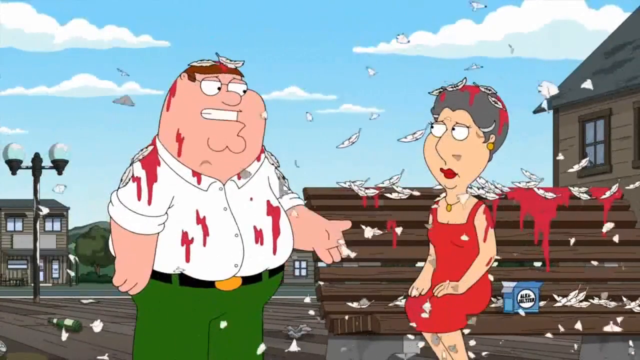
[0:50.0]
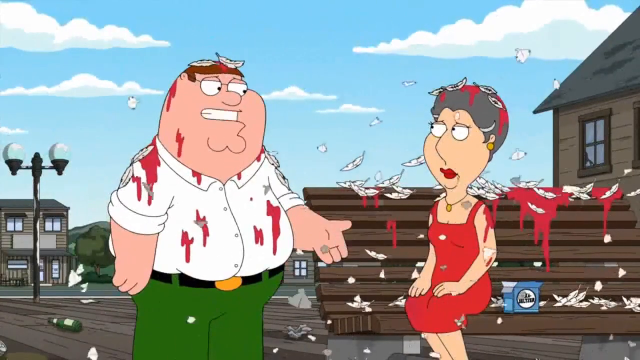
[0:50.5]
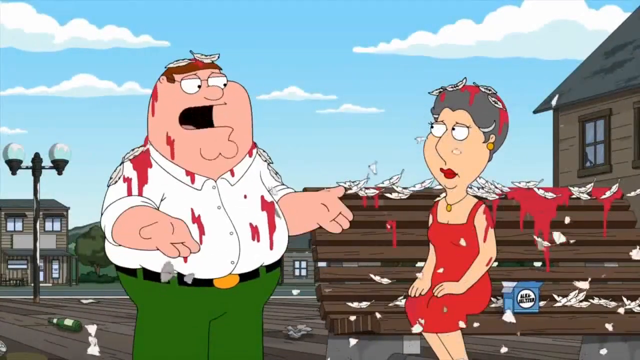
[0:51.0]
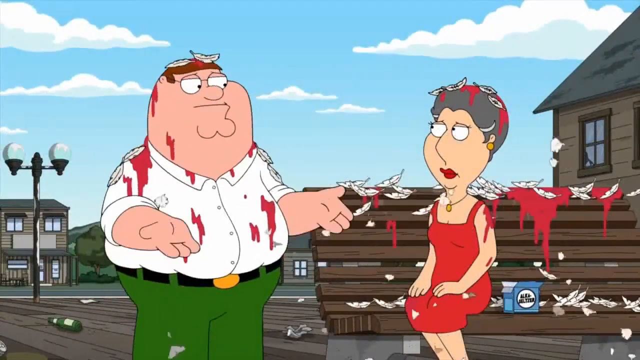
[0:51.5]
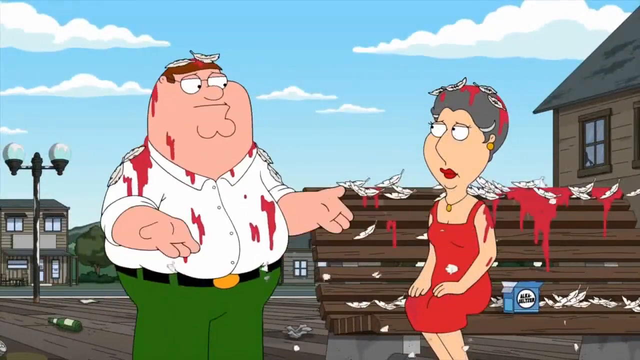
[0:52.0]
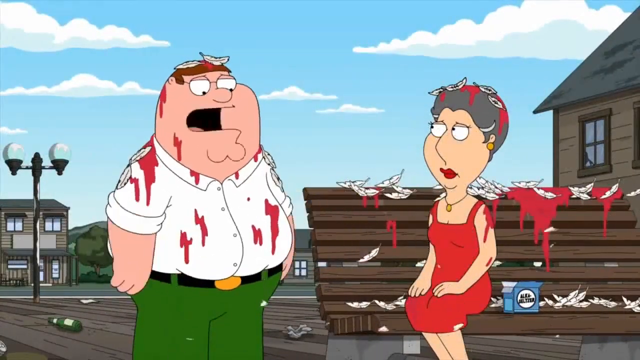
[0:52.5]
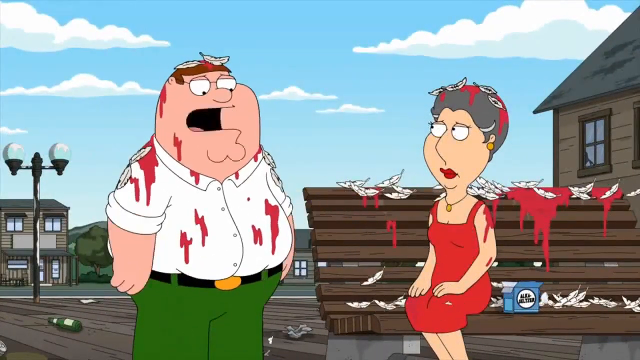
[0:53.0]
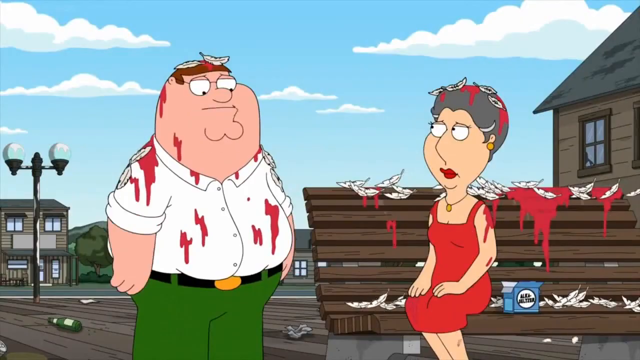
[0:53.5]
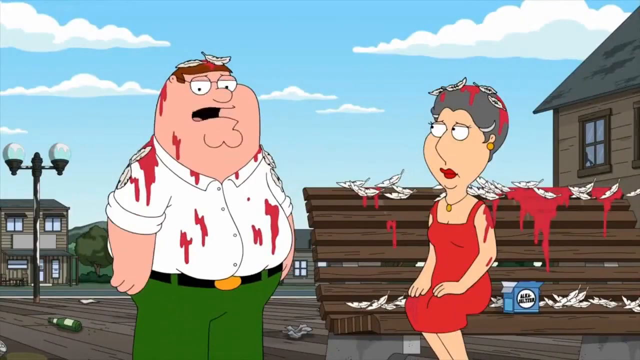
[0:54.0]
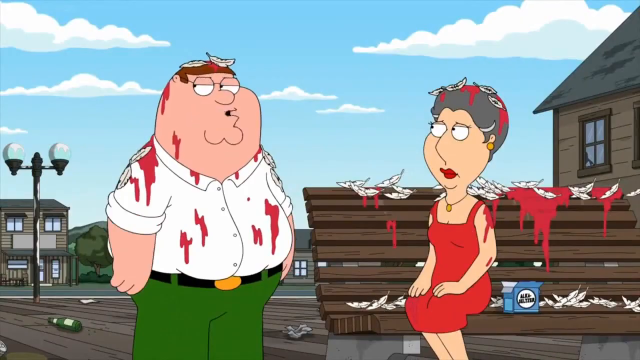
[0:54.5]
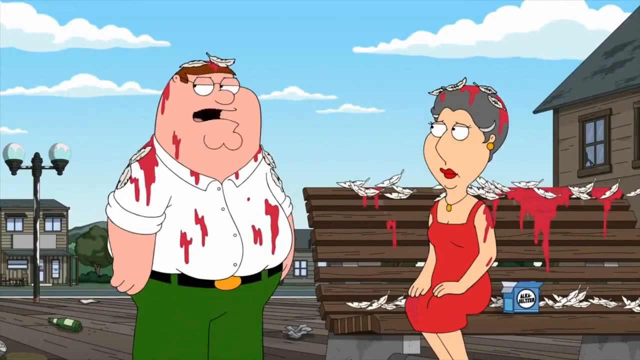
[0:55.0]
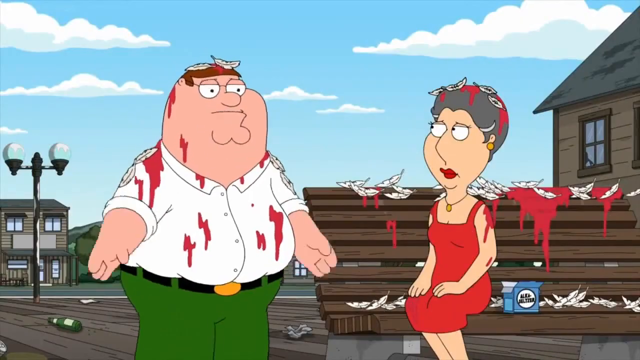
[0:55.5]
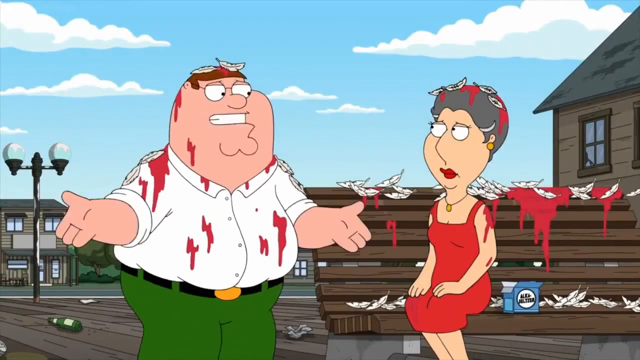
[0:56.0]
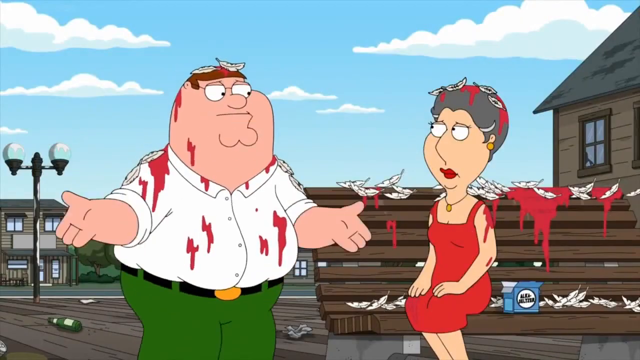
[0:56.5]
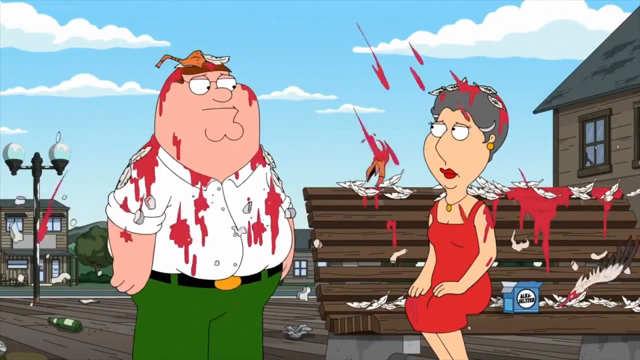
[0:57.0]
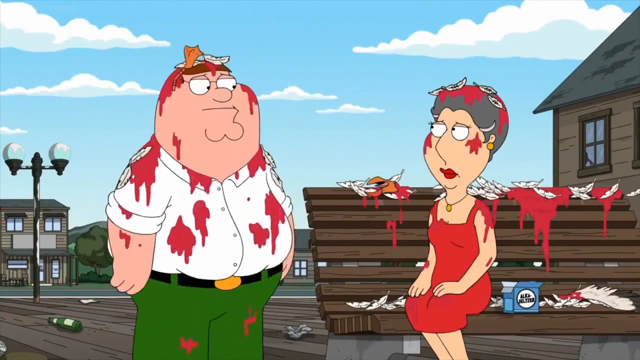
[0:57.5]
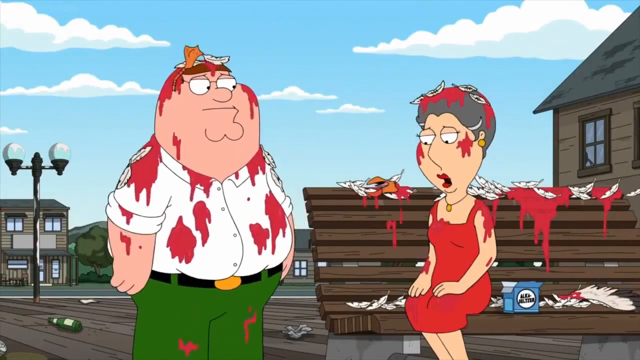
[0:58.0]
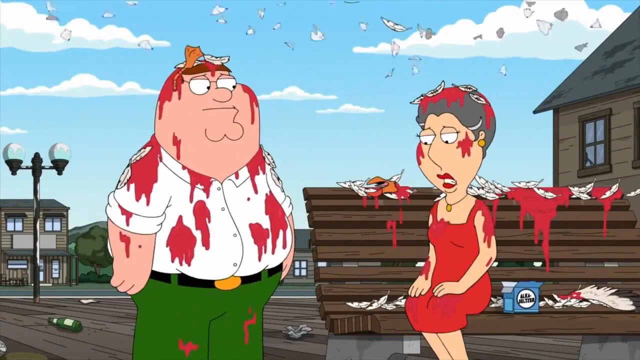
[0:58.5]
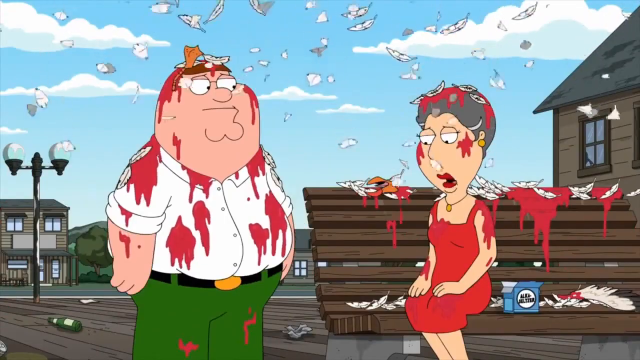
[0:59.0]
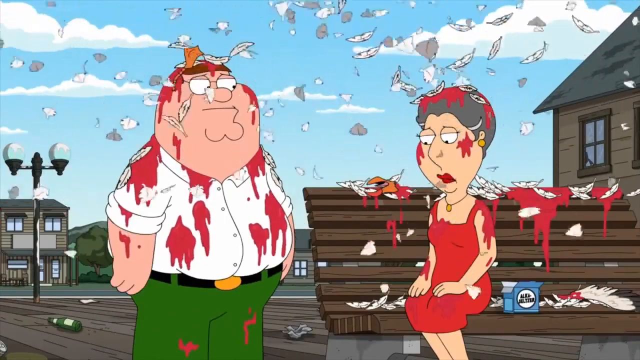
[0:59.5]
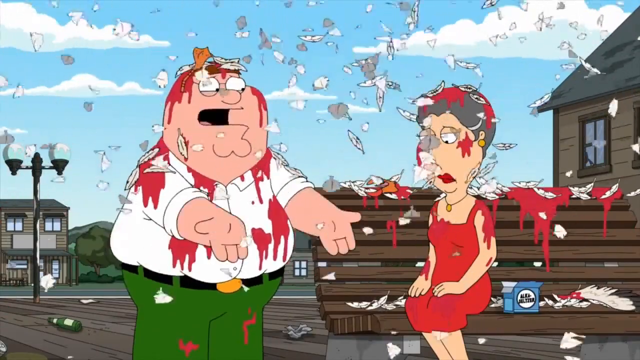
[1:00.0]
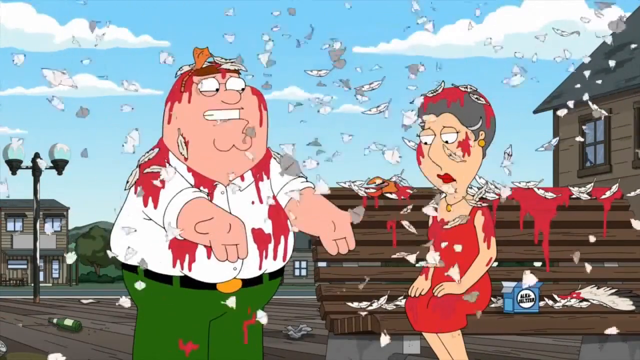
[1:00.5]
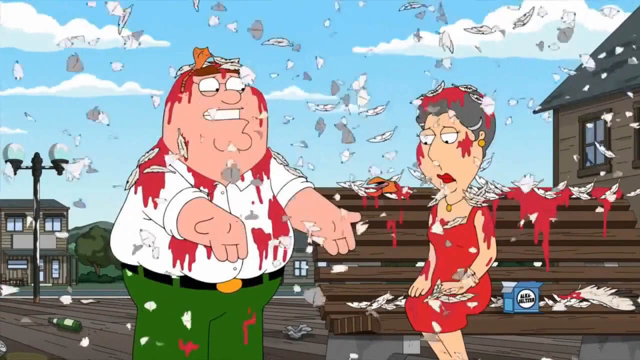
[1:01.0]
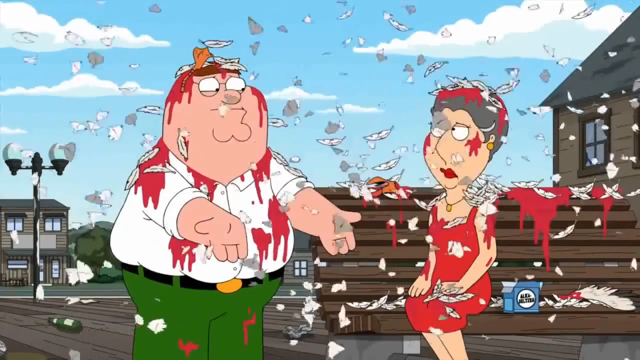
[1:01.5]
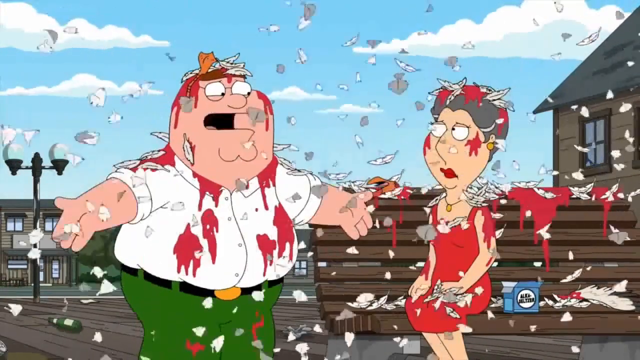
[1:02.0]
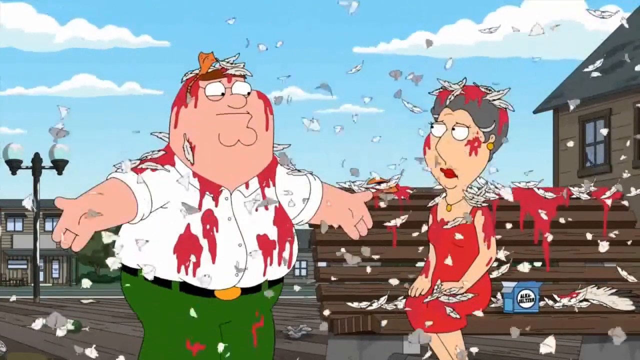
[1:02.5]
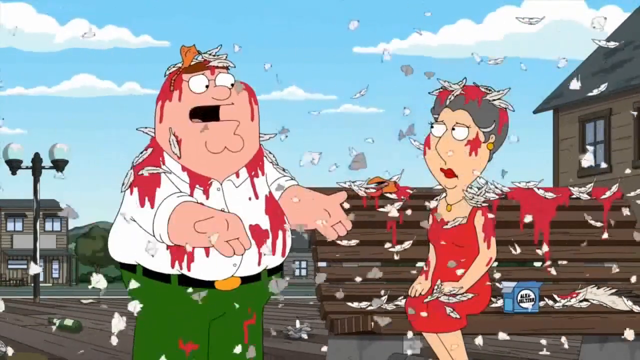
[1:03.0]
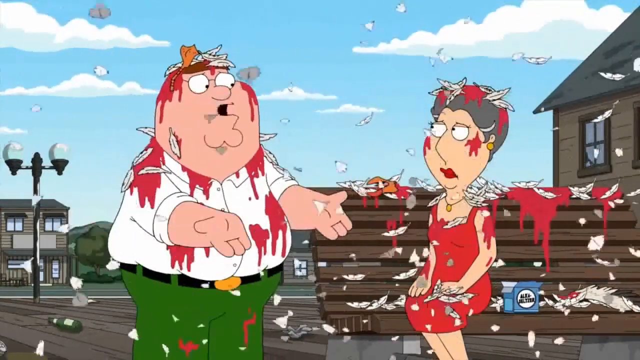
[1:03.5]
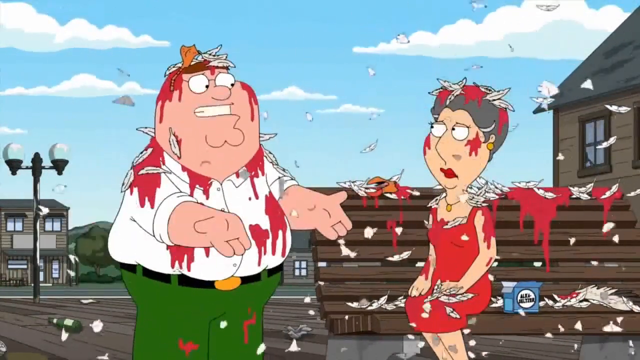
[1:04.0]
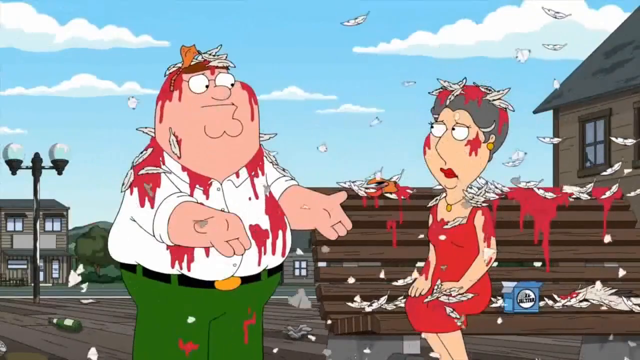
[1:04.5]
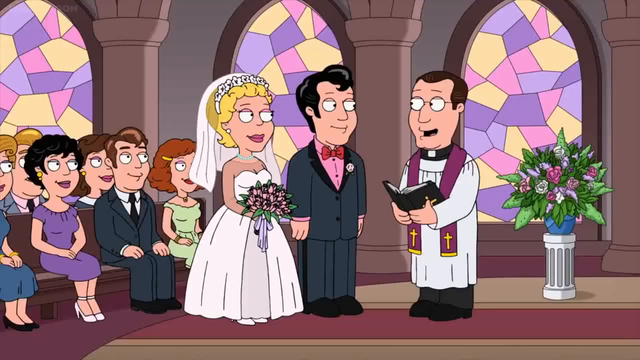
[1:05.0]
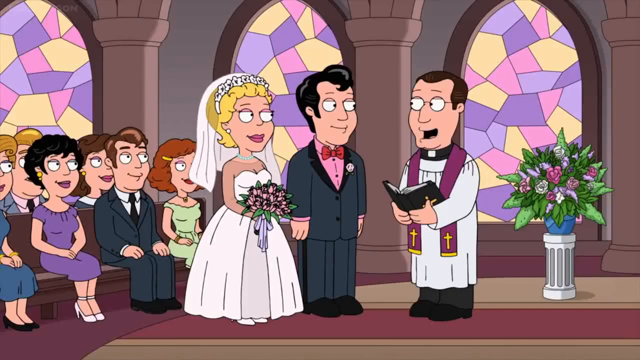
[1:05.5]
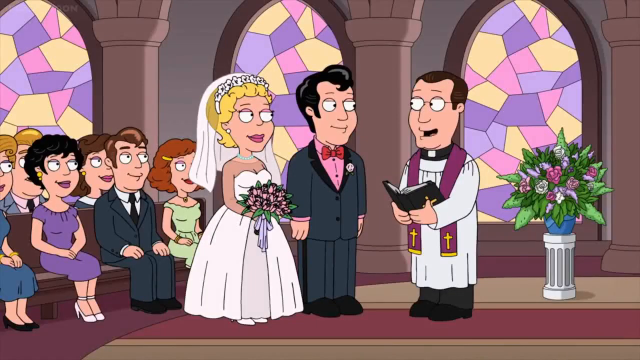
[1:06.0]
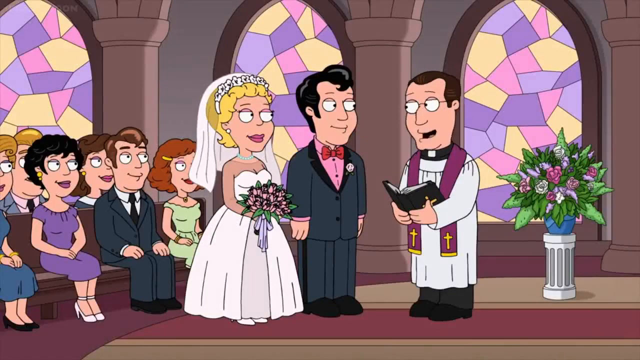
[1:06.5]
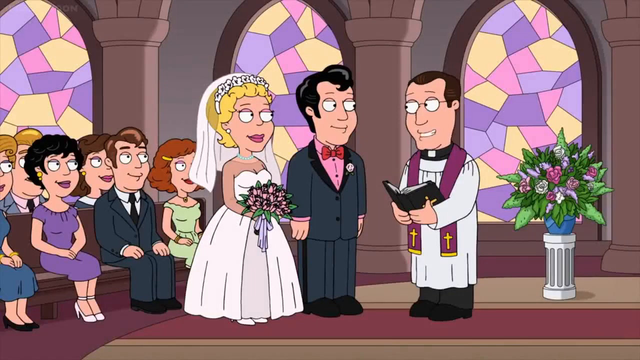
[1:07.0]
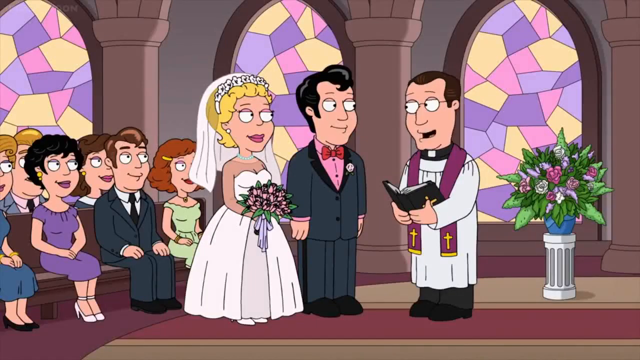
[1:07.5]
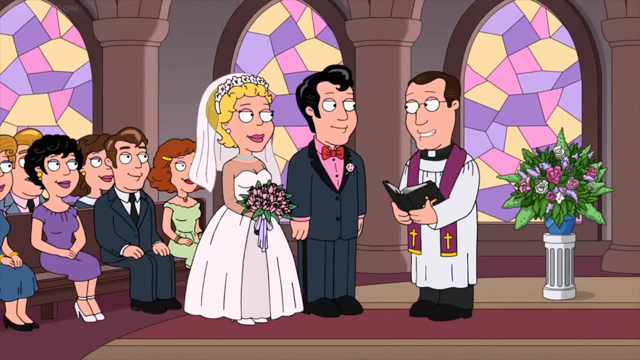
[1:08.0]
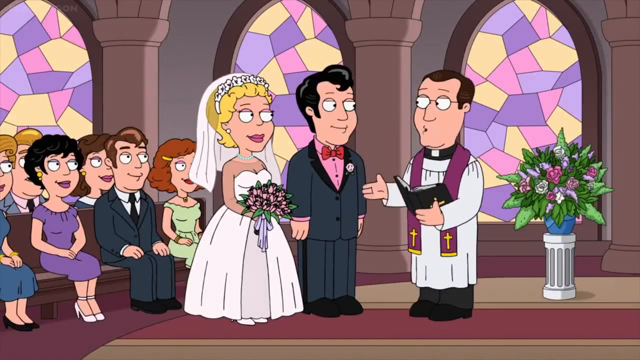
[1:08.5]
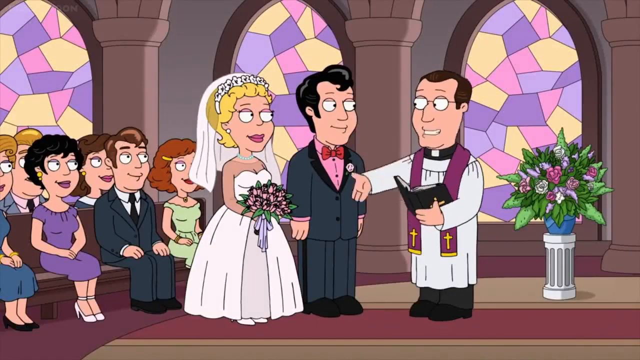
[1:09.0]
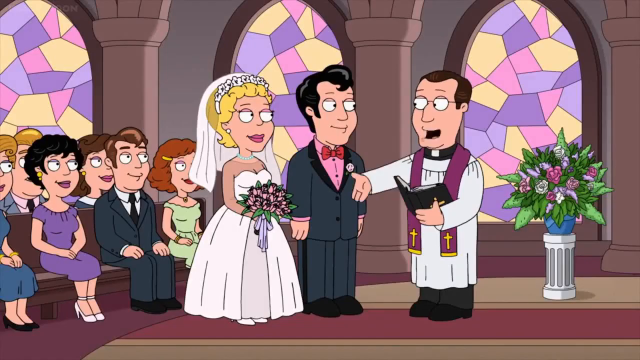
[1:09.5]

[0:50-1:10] The man and woman on the boardwalk still have blood and feathers all over them. The man is talking to the woman, who is sitting on the park bench and contentedly staring at him. More stuff falls on their heads along with more feathers, possibly from another bird. The scene then moves to a church, where a man and a woman are getting married, possibly a flashback to the older couple's wedding. She wears a white dress and he is skinny, compared with the older man now being big and overweight and the woman now gray rather than blonde. A few people watch, and a priest is present. The church has pink, purple and yellow windows.